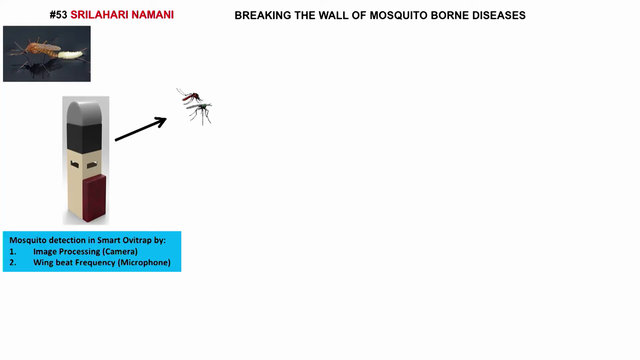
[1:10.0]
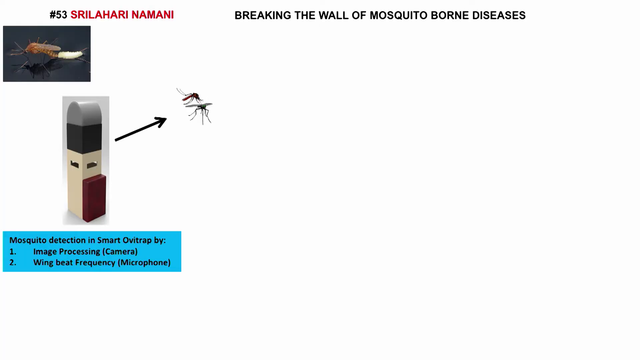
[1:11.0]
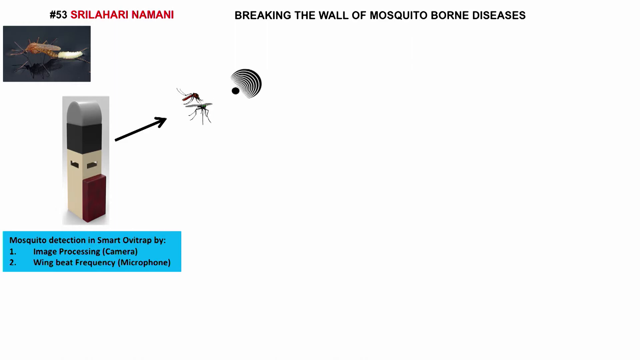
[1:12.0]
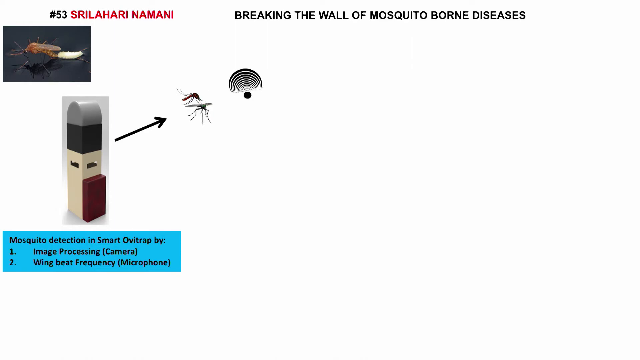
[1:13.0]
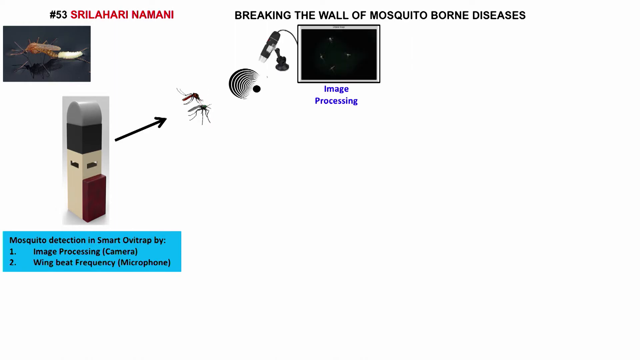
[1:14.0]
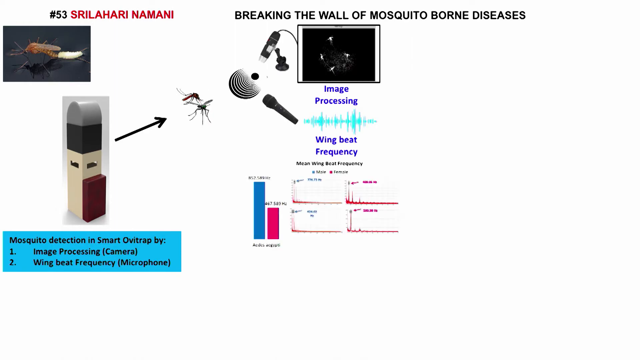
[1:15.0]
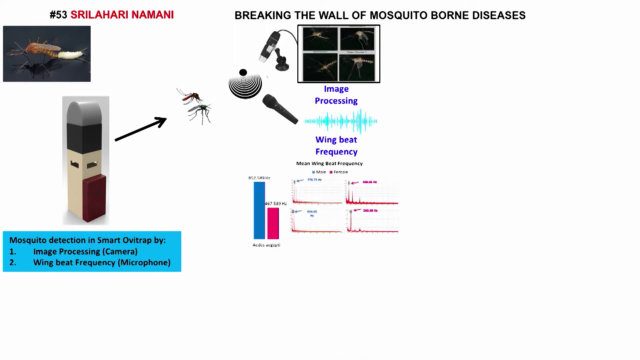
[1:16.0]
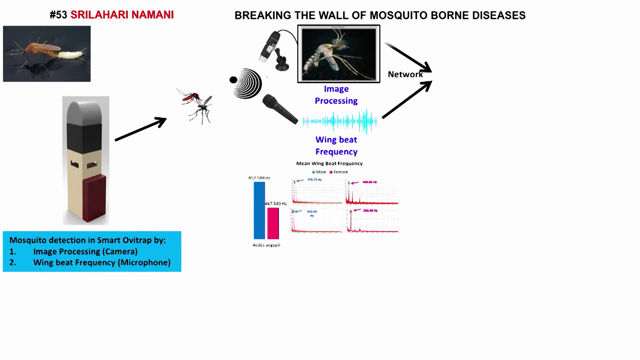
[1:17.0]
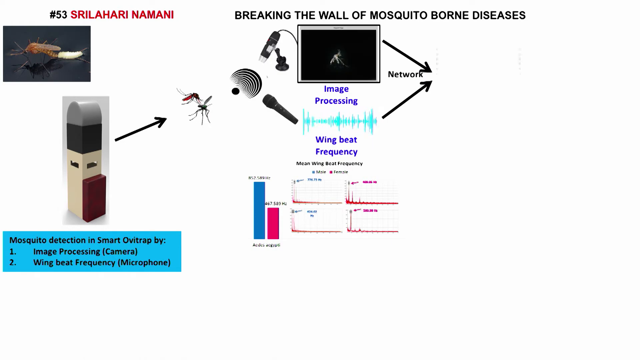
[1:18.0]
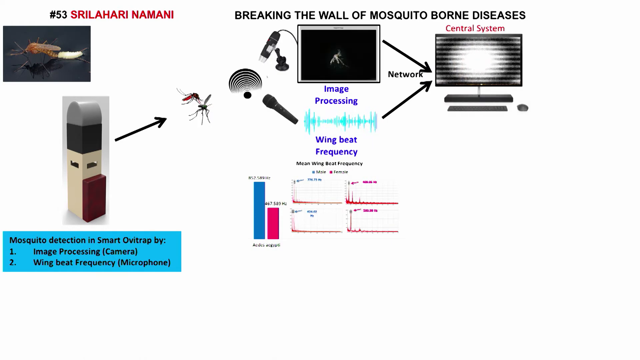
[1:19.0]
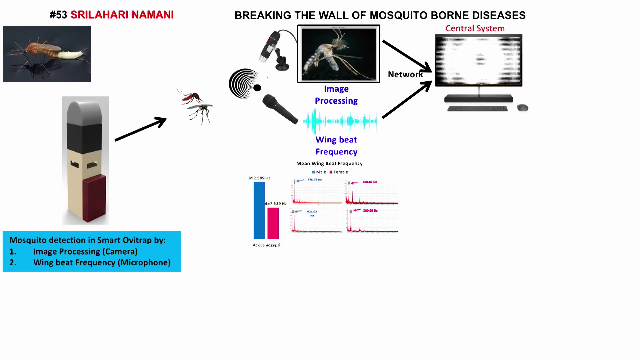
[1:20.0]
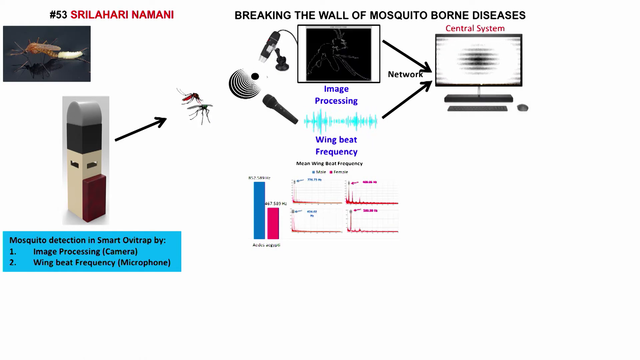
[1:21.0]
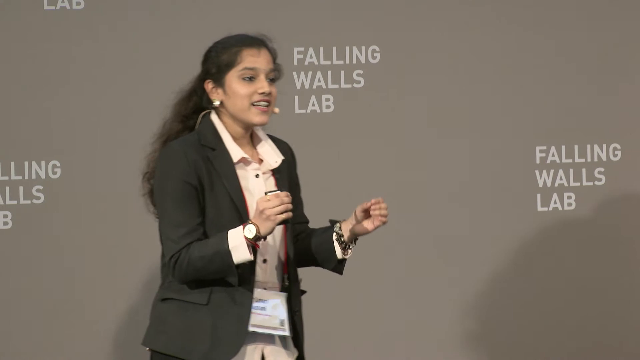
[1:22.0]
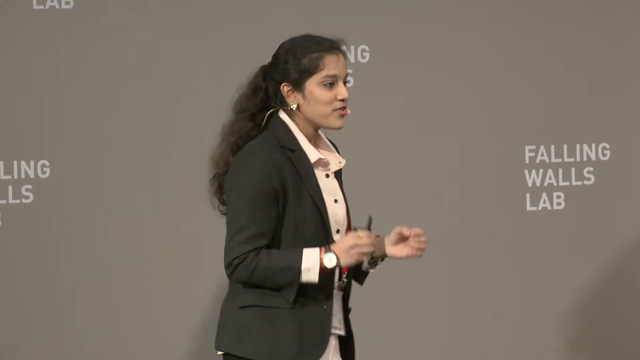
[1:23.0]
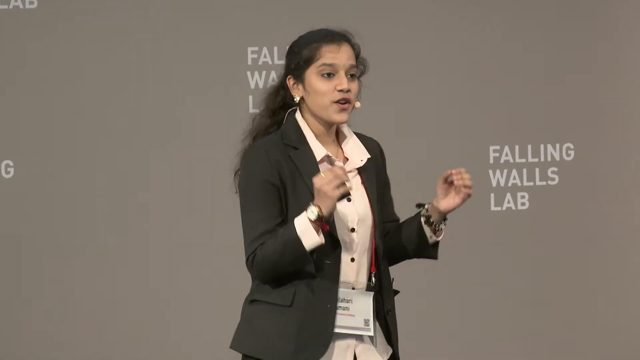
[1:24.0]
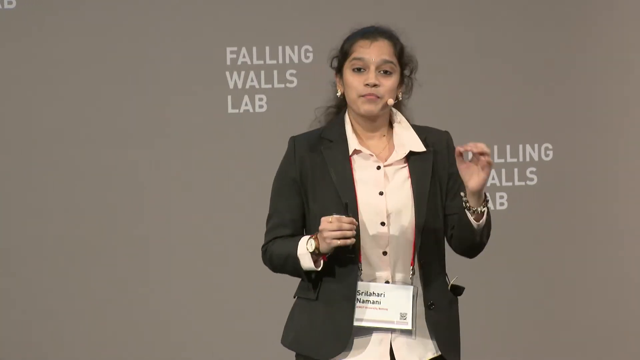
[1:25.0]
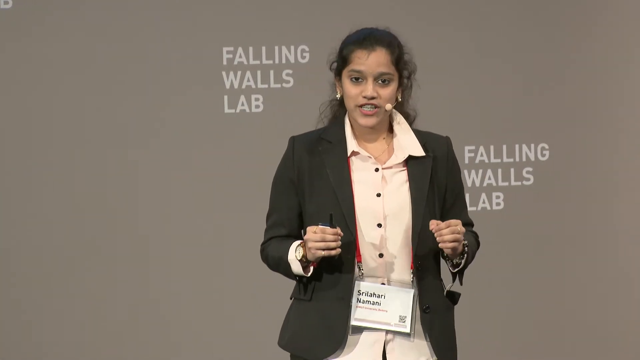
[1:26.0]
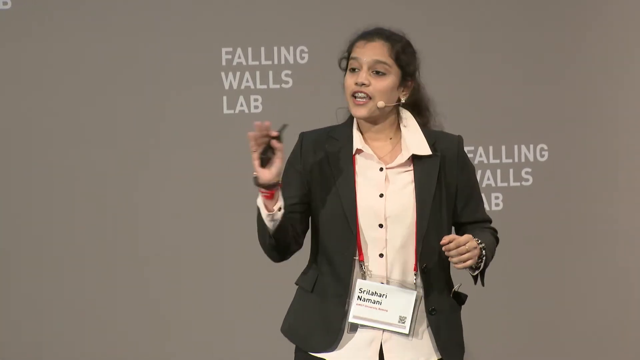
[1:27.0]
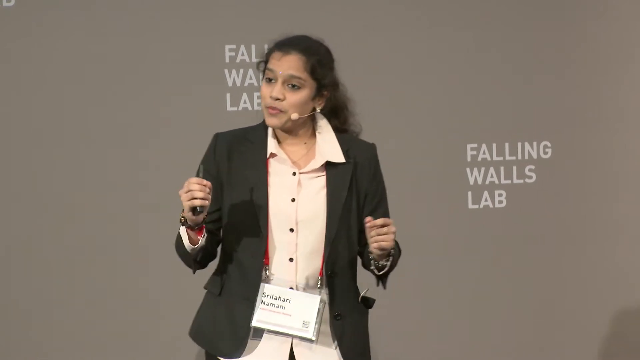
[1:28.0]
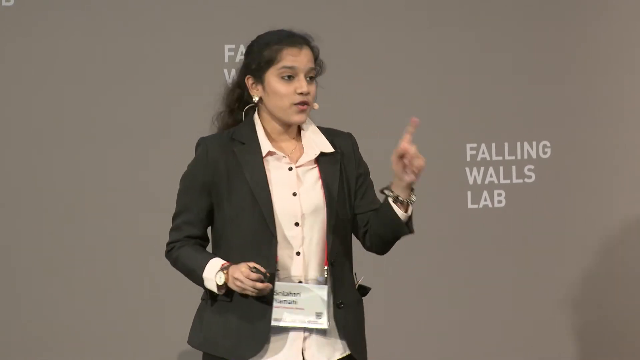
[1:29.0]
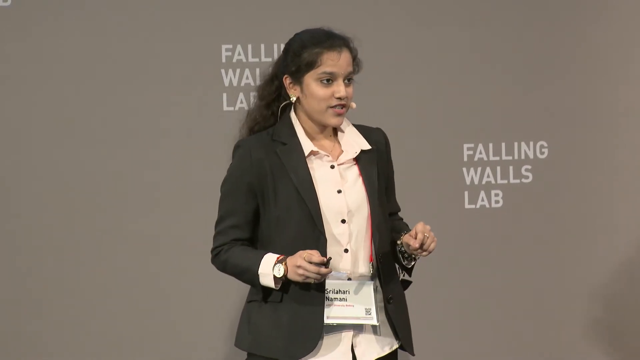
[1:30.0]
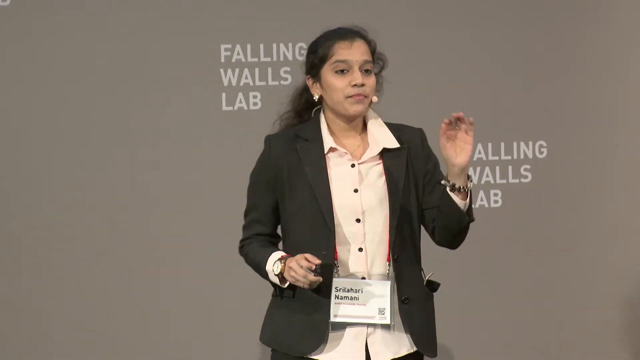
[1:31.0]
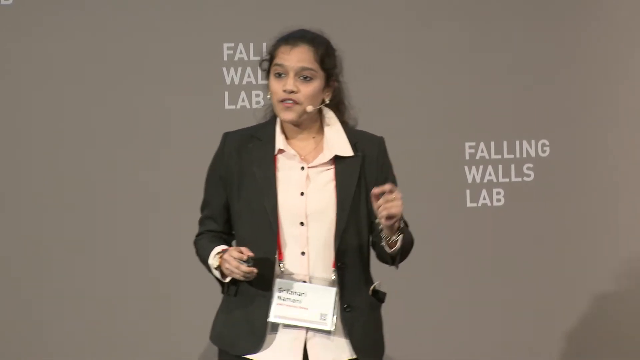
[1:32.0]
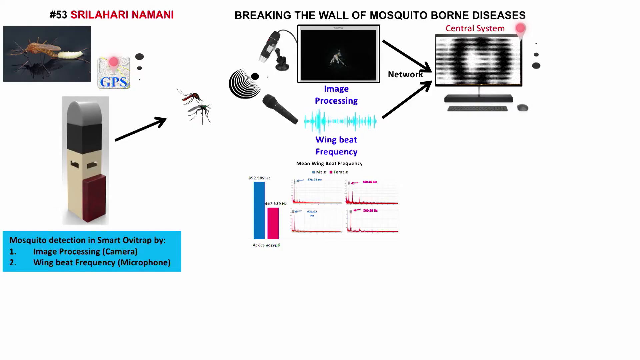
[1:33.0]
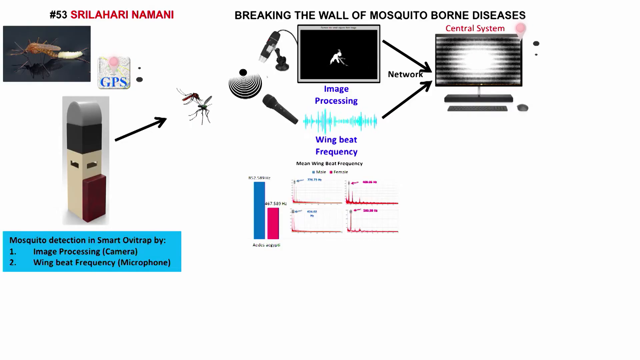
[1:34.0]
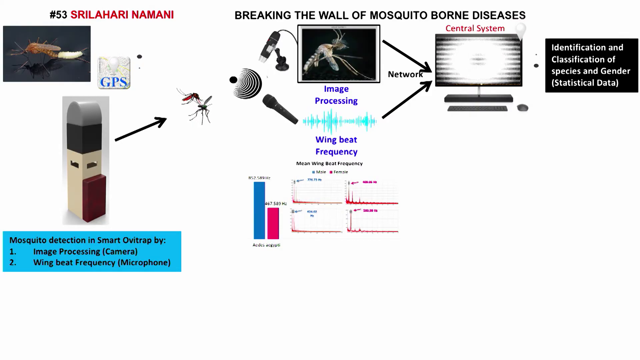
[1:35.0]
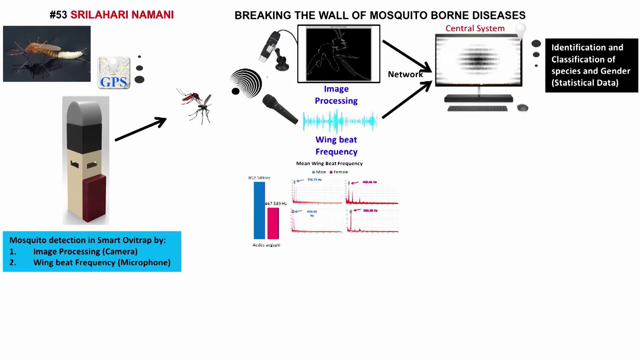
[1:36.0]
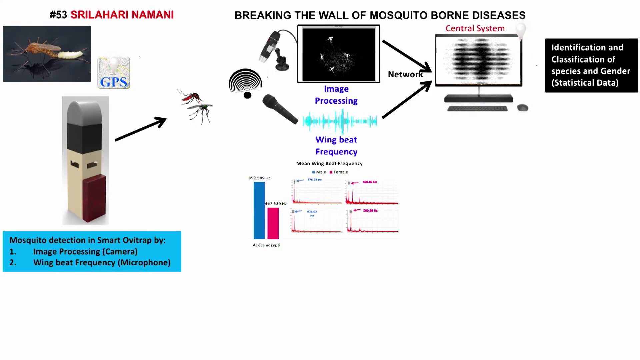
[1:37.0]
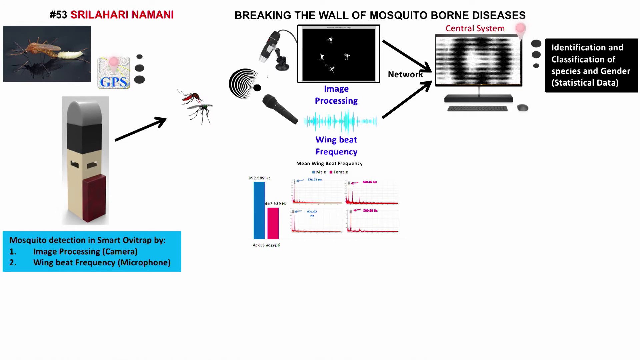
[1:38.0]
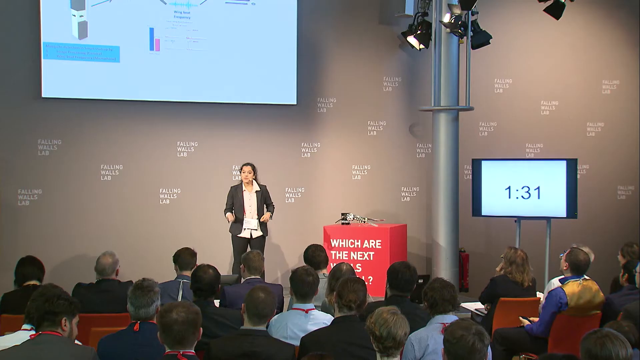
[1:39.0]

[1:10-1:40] This part of the presentation has a photo at the top left of a mosquito against a shiny black background. There is an unclear white strip behind it, at the back of the mosquito's body, and the mosquito's shadow is visible on the surface it is standing on. Below that photo is a picture of a mosquito detection device that looks like a little chimney. It is a cream column, square at the bottom, with rectangular holes partway up on at least the two visible sides. Above that is a black section of the column, and at the very top is a gray part that is rounded on top. On the visible right side, at the bottom, a red box is attached to the cream part of the column. A black right arrow points toward two black mosquitoes to the right of the device. A blue text box reads in black: "mosquito detection and smart OB trap by 1 image processing (camera) and 2 wingbeat frequency (microphone)".